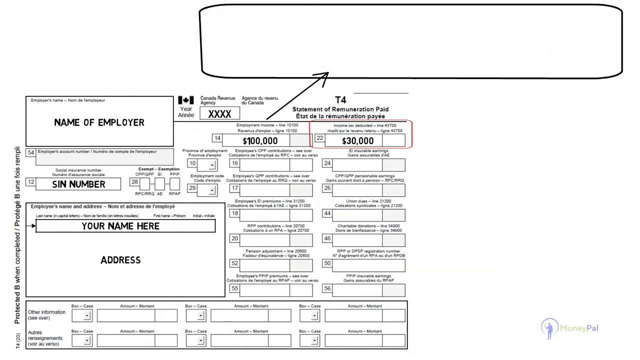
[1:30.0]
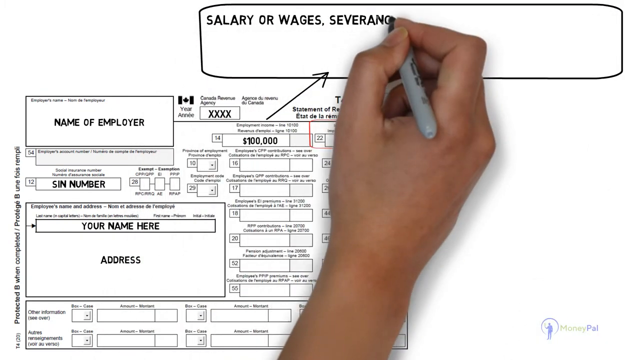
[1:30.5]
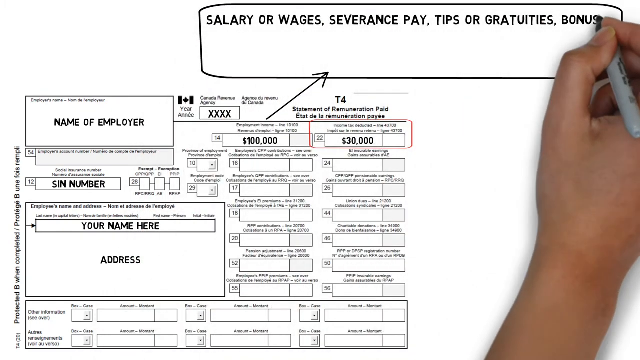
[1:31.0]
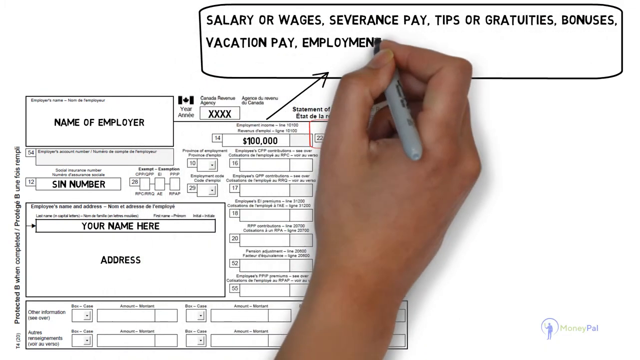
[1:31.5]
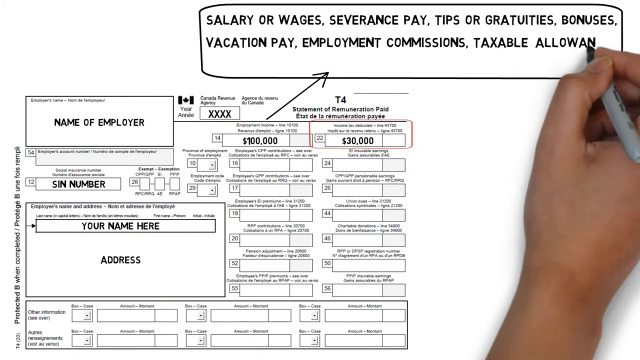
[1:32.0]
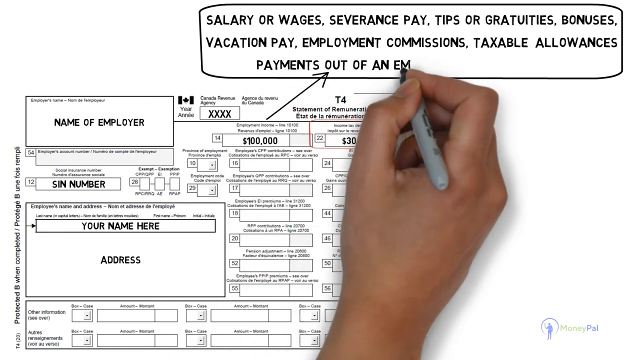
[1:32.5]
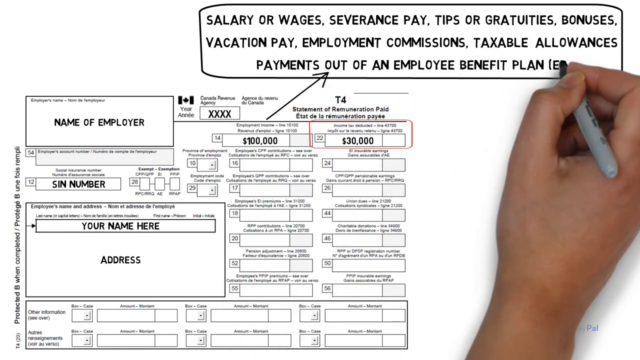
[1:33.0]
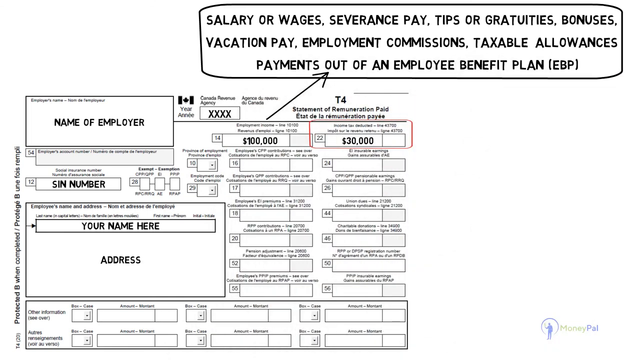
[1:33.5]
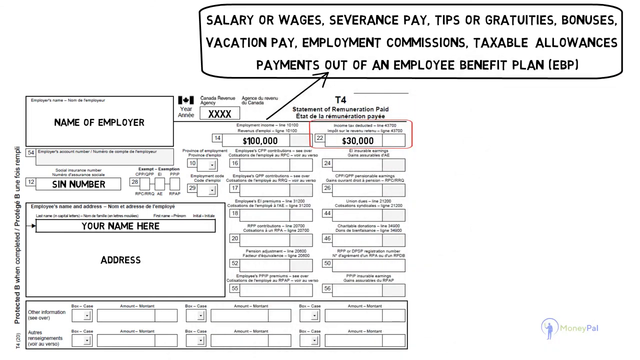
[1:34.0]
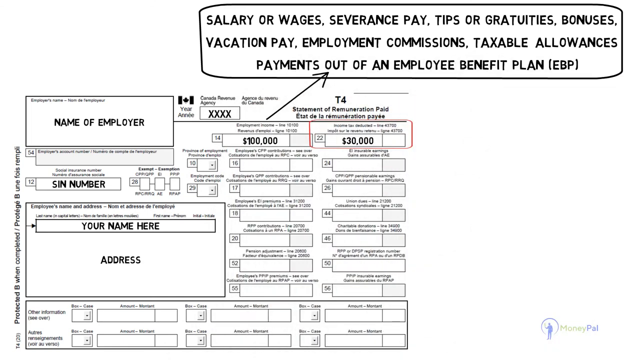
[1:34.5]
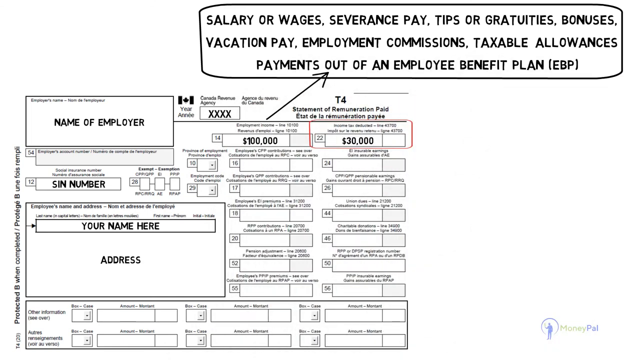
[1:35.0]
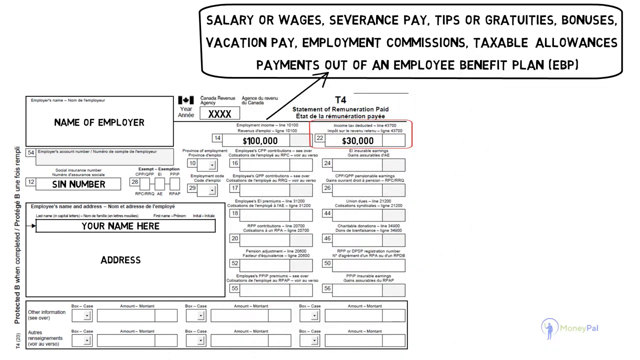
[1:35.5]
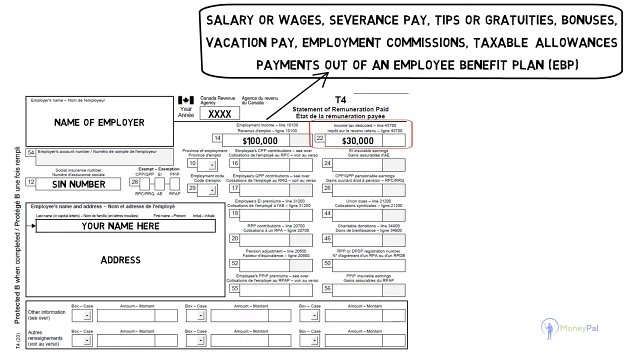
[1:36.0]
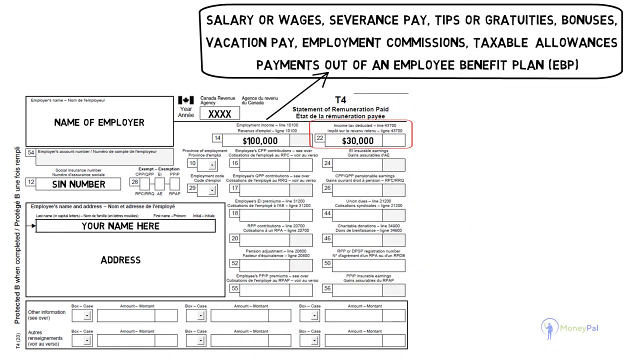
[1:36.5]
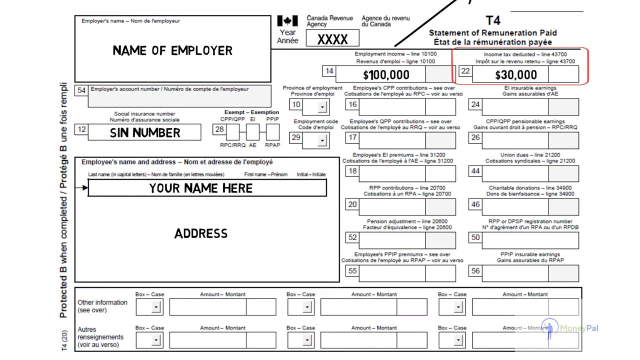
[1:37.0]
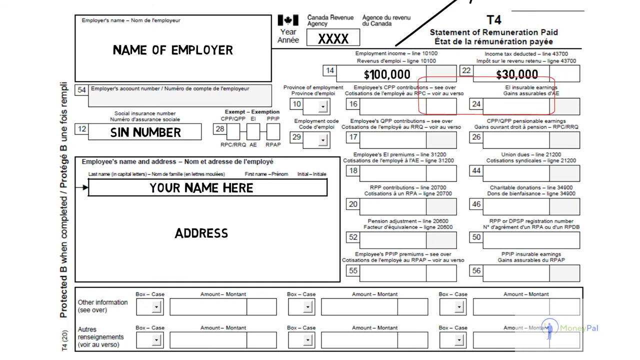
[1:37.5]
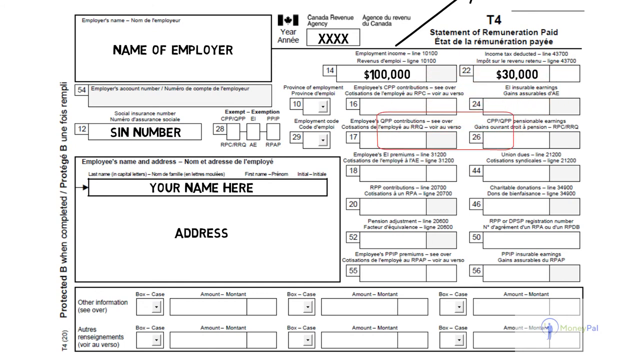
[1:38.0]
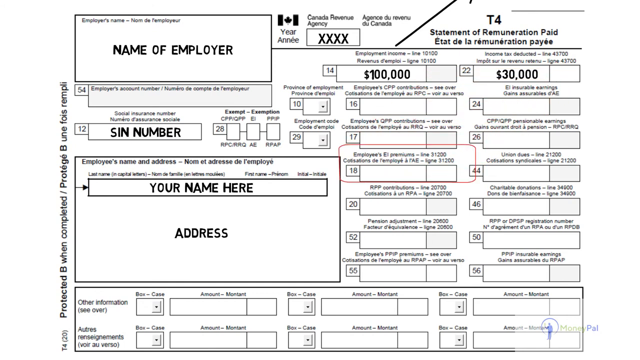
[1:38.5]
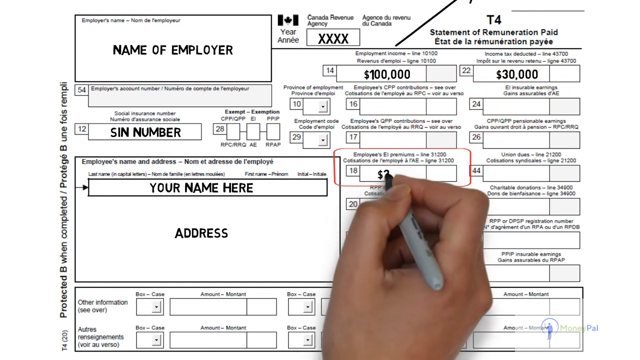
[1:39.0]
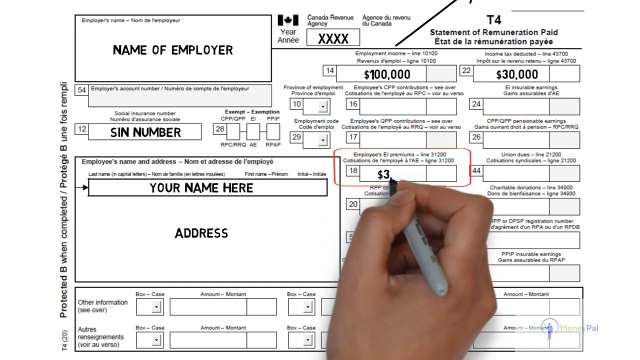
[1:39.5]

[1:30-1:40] A big rectangle drawn by the hand is in the top right corner above the T4 slip, and the shrunken square rests on the 30,000. The person writes in the block: "salary or wages, severance pay, tips or gratuity, dues, bonuses, vacation pay, employment, commissions, taxable allowances, payments out of an employee benefit plan (EBP)". The view zooms back into the T4 slip, and the square moves from the 30,000 to the next column, then down past two empty columns to the third empty one, where an amount of 3000 USD is entered before the video cuts.